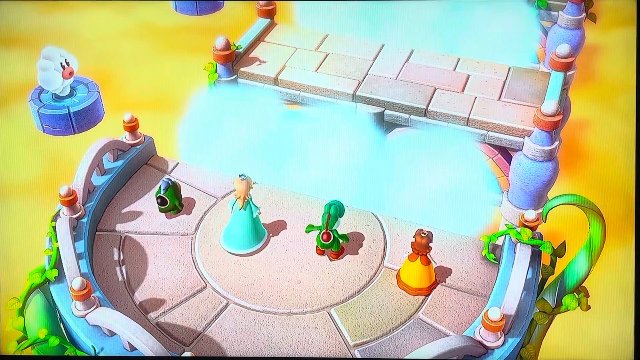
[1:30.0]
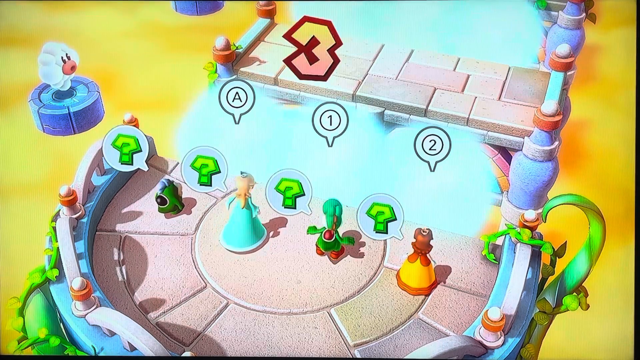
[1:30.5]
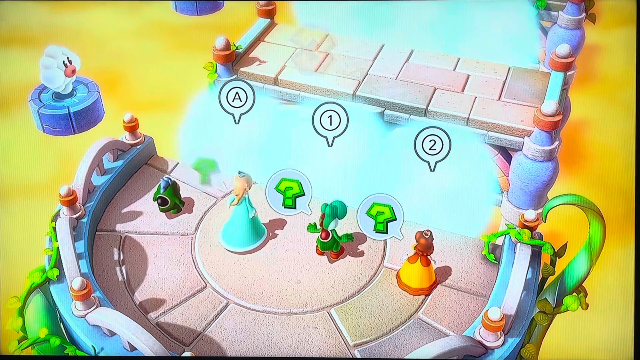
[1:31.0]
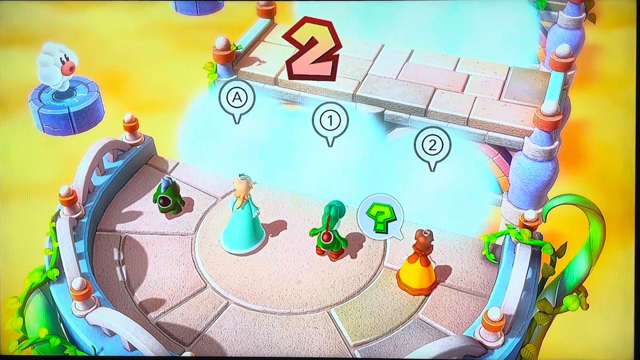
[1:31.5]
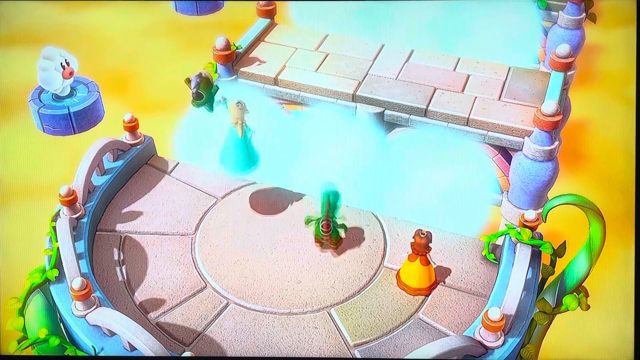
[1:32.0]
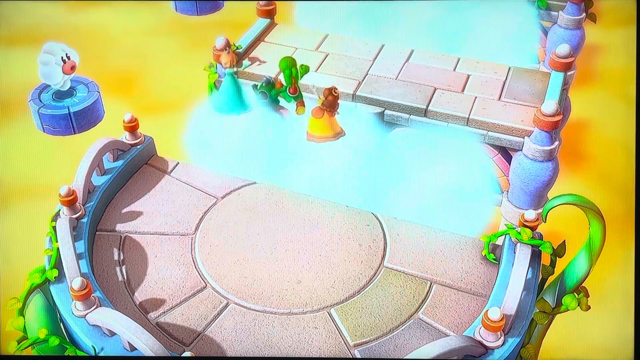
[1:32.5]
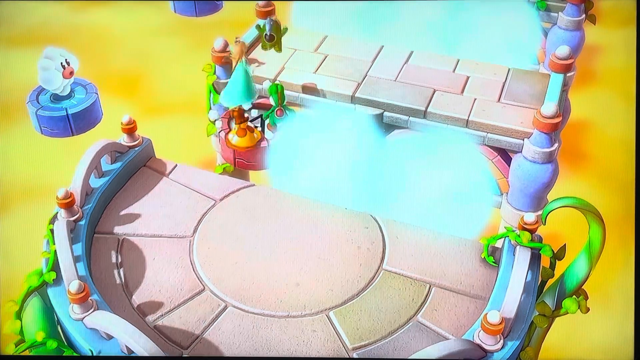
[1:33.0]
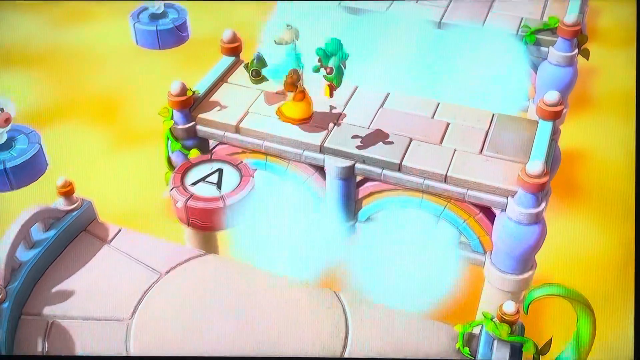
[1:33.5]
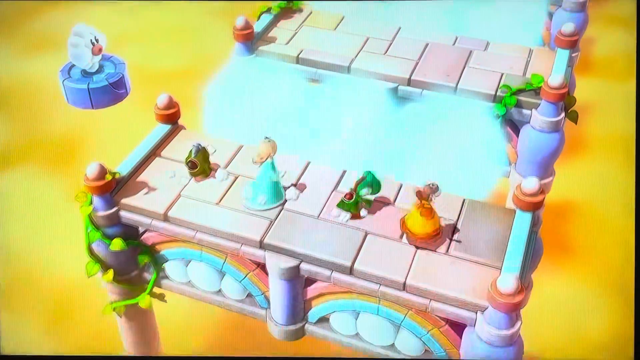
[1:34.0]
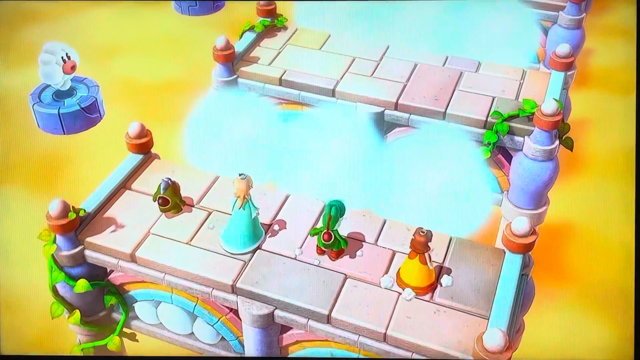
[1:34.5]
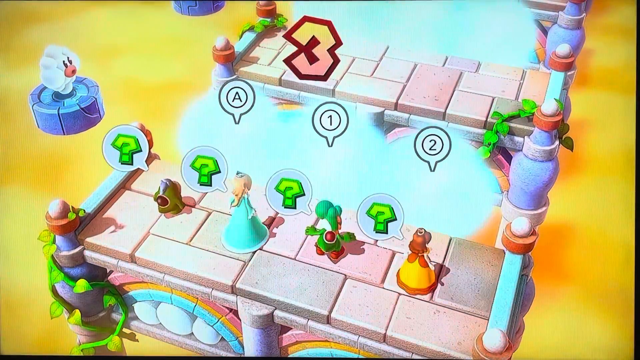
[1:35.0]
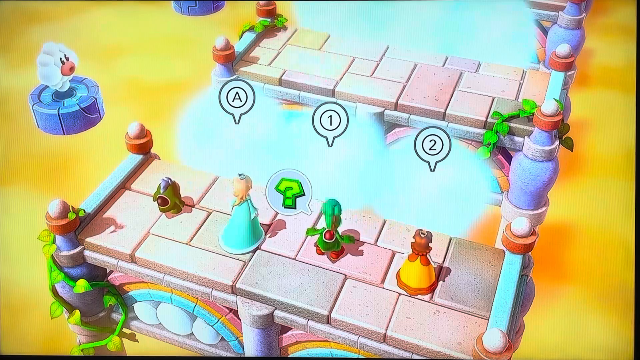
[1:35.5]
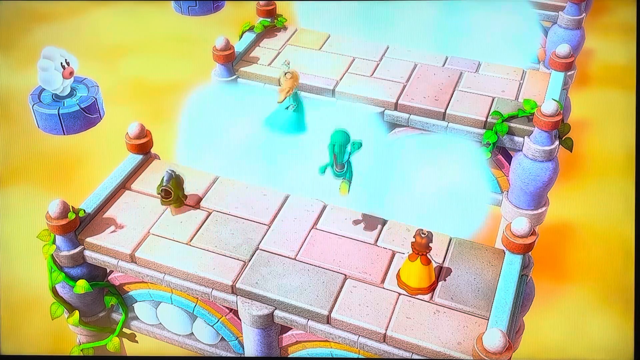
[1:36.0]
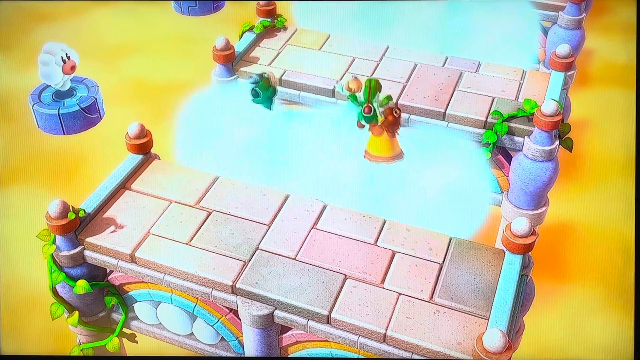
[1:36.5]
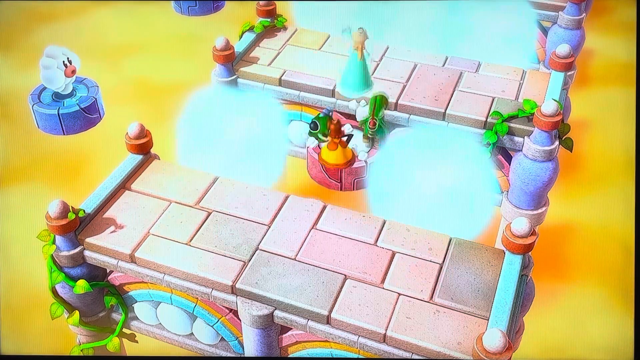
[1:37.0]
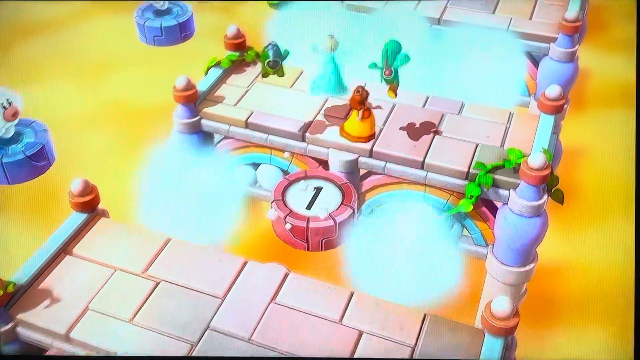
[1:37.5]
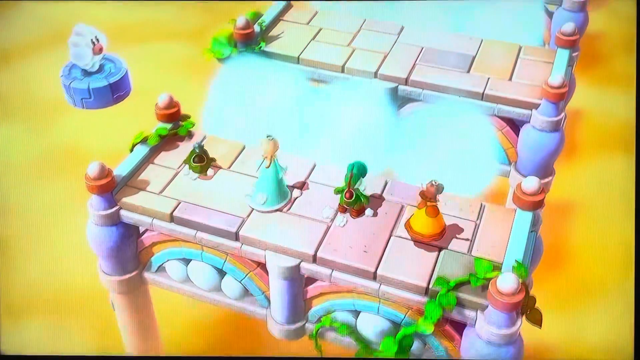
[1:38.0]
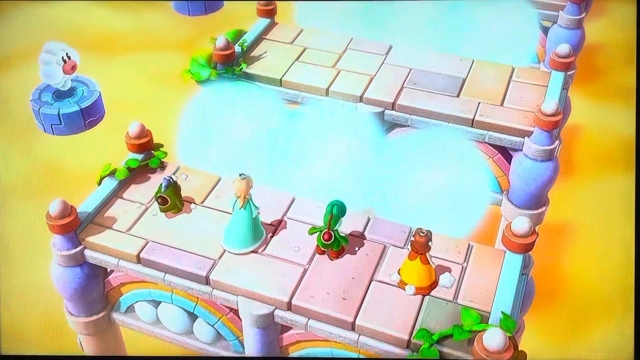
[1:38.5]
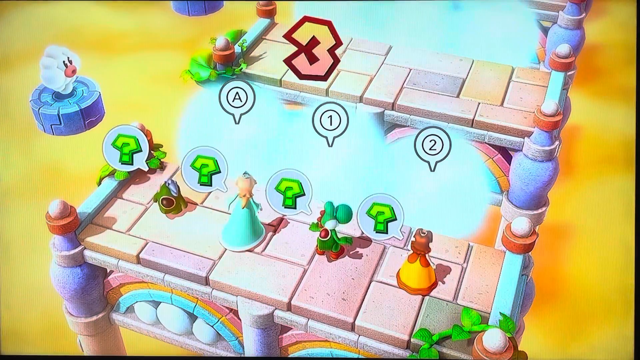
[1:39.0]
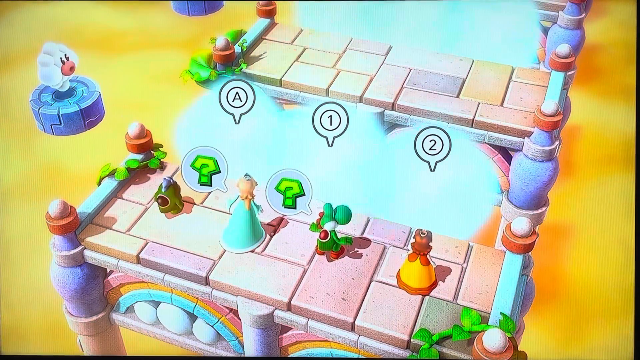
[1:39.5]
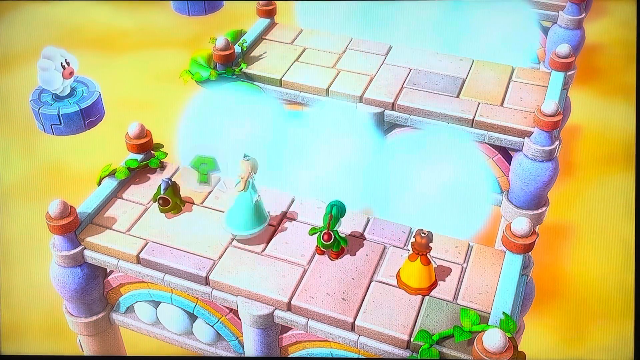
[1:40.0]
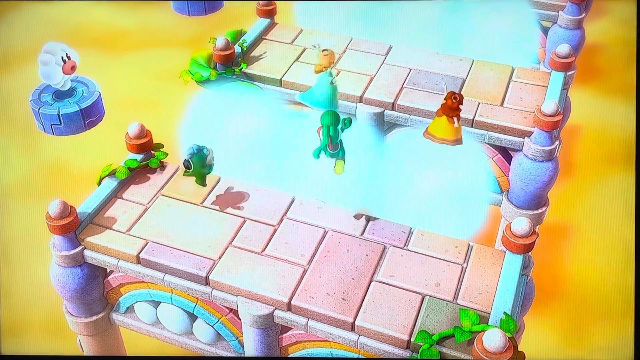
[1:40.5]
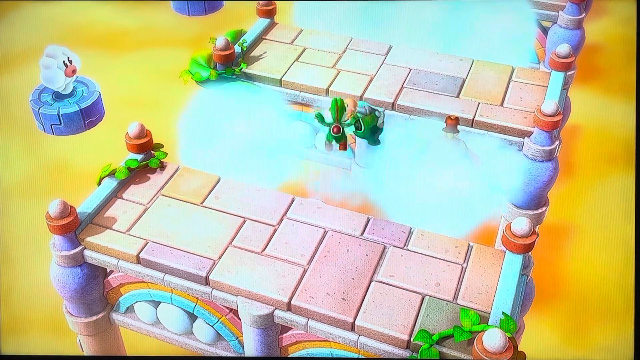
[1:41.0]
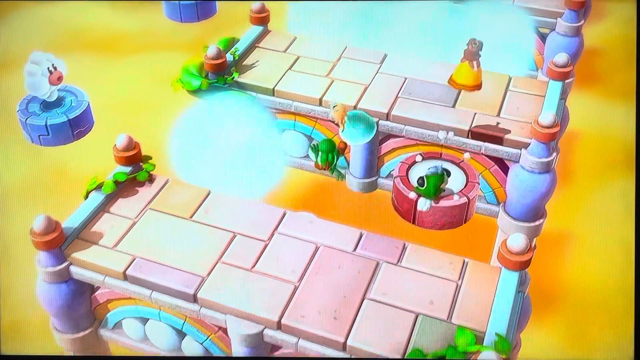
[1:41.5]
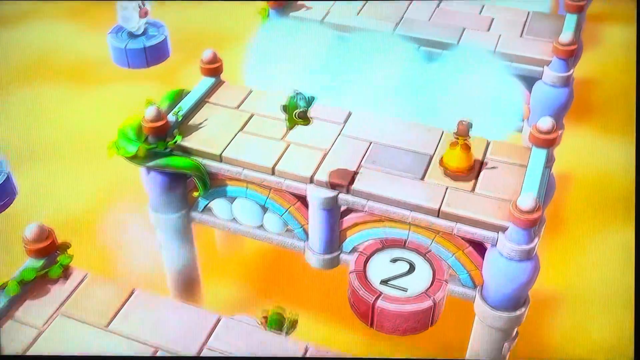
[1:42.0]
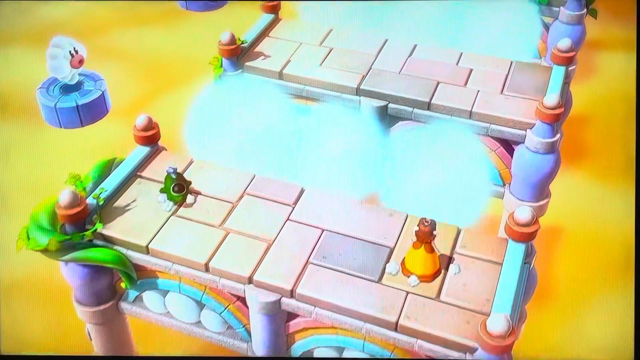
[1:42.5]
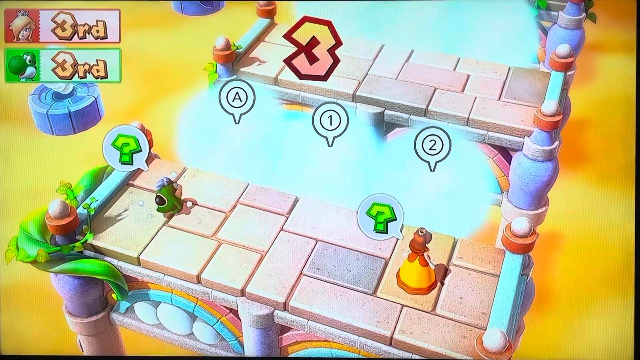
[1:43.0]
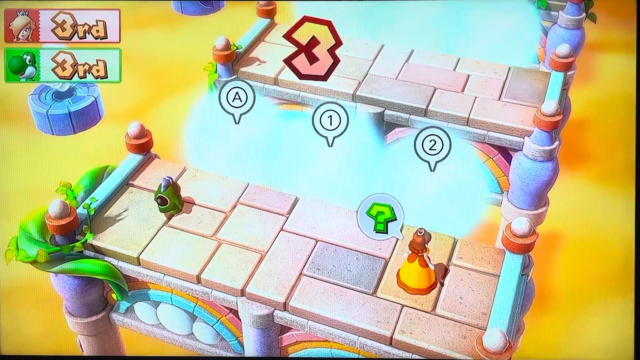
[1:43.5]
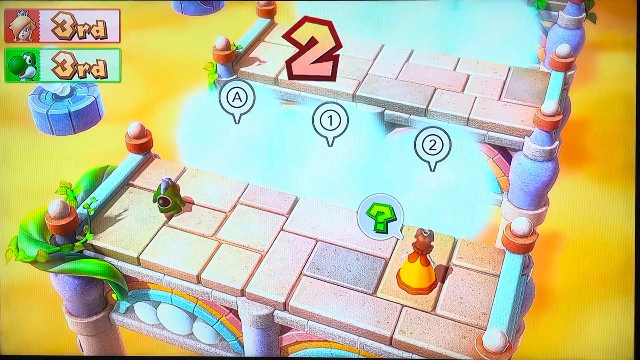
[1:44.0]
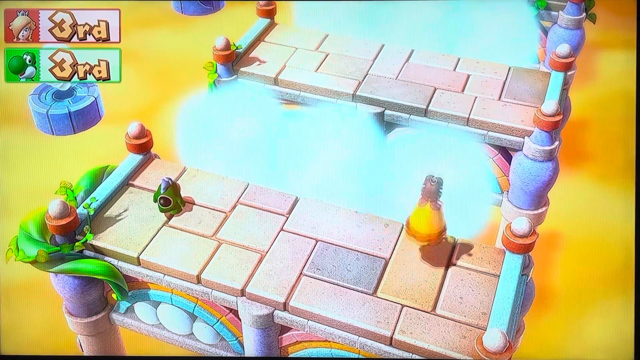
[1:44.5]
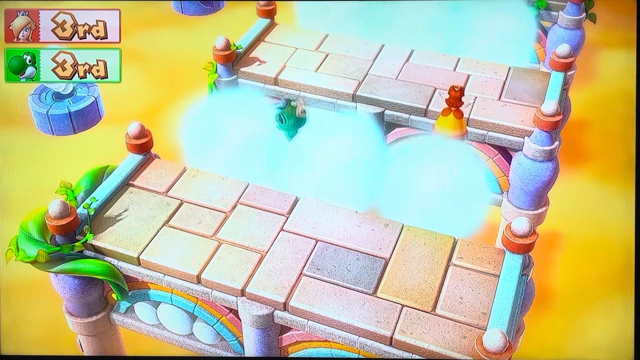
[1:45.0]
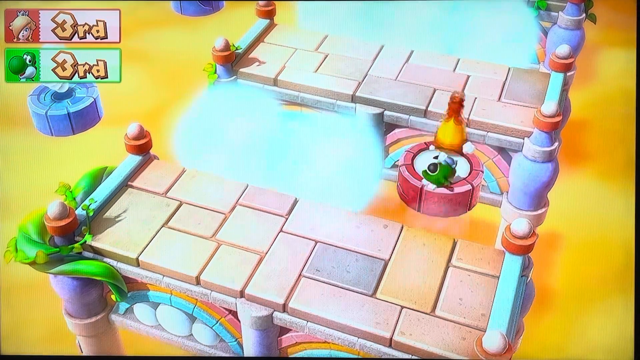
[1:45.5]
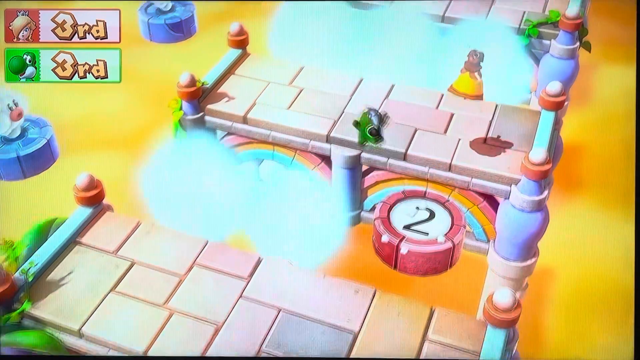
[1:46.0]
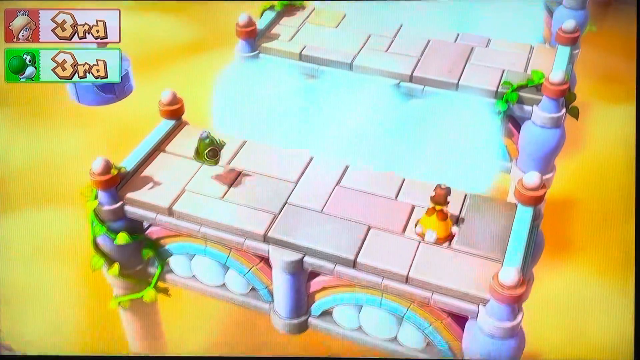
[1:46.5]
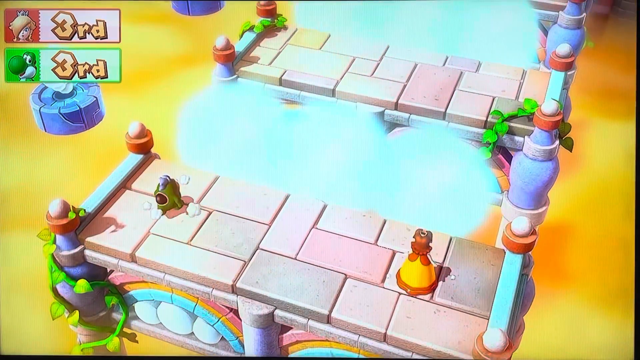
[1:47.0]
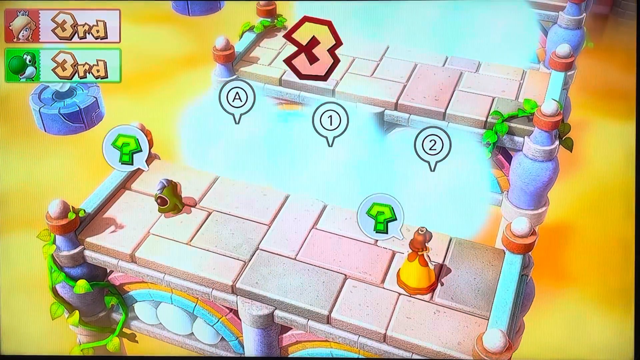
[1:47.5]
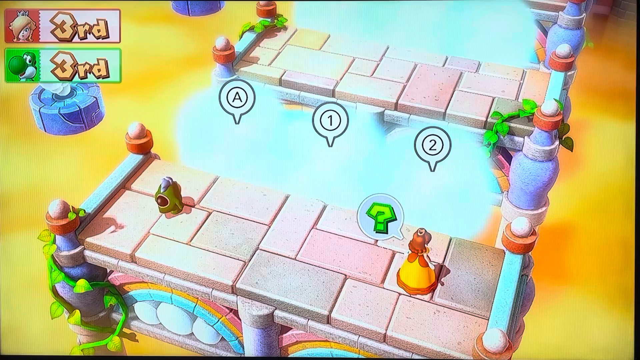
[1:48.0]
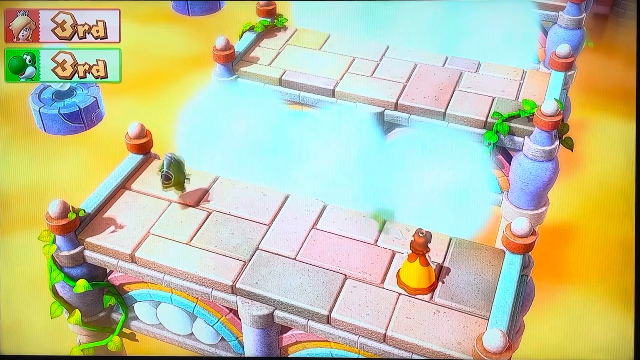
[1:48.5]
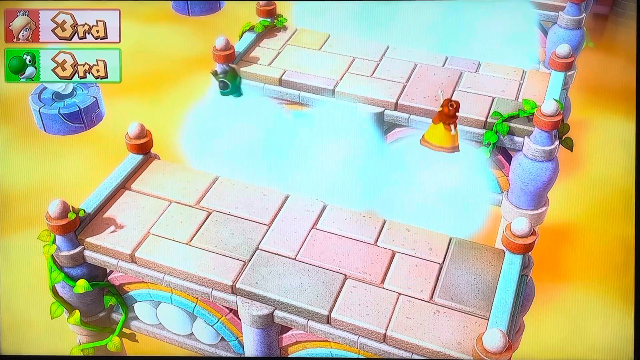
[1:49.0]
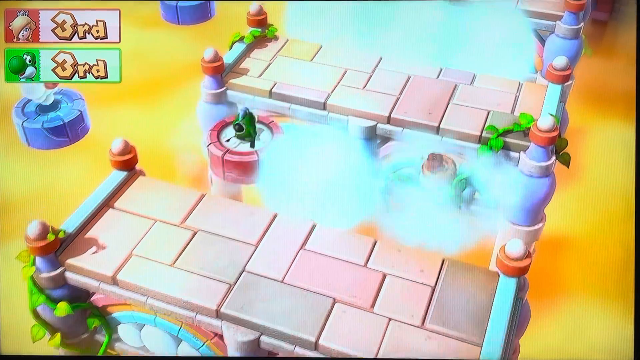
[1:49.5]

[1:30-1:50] The game is being played, with the player jumping to the different platforms. The player is apparently the penguin character, and it looks like they have made all the right choices so far. Two of the computer characters have fallen out, apparently Peach and Yoshi, while Daisy is still in. There are 7 platforms in total, and the player is on the 4th. The gameplay is pretty slow so far.